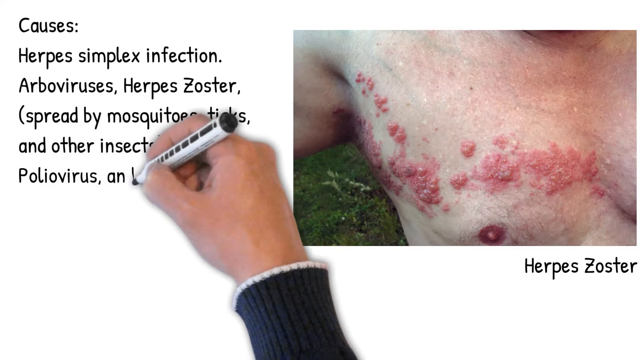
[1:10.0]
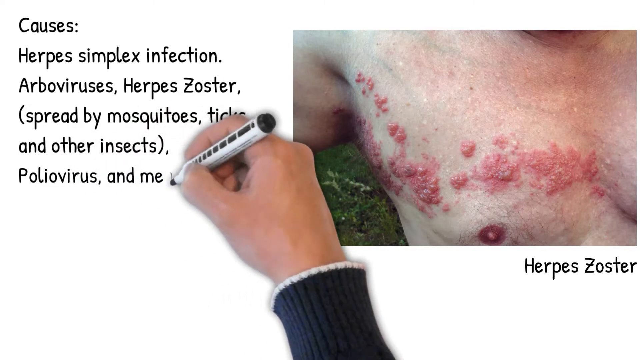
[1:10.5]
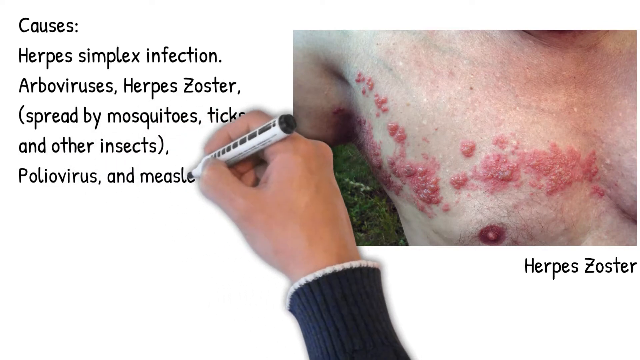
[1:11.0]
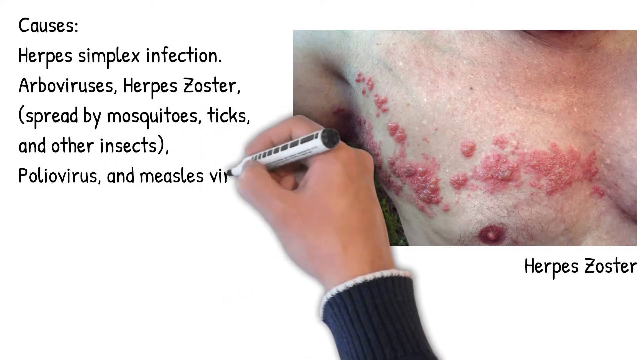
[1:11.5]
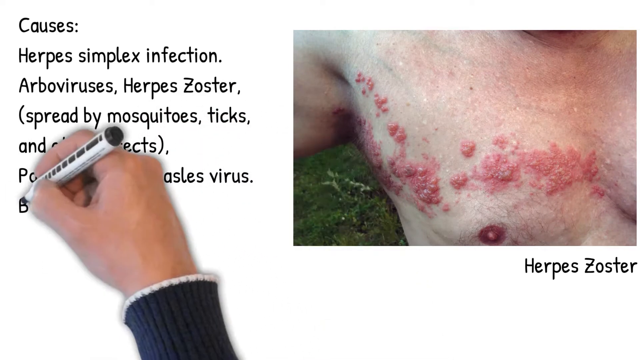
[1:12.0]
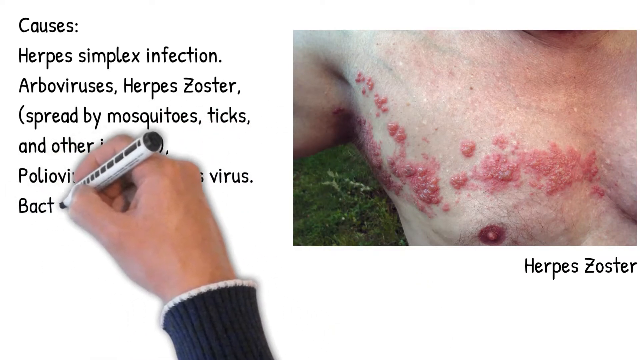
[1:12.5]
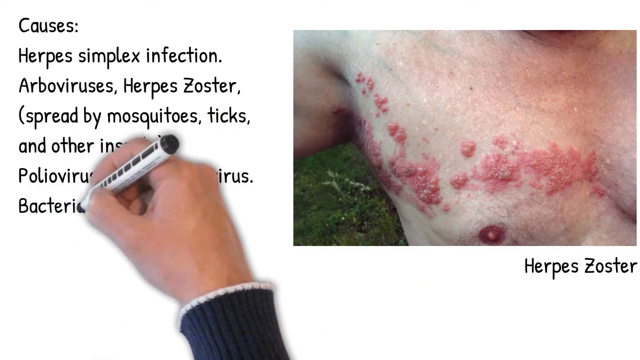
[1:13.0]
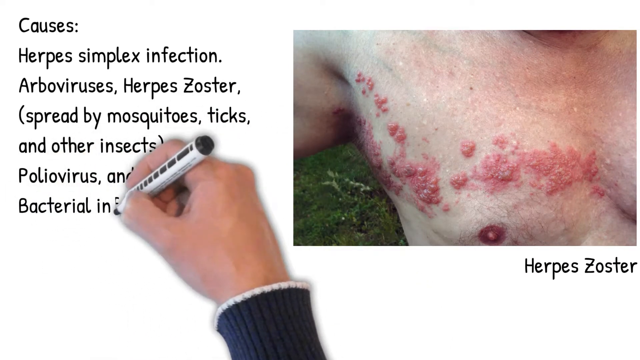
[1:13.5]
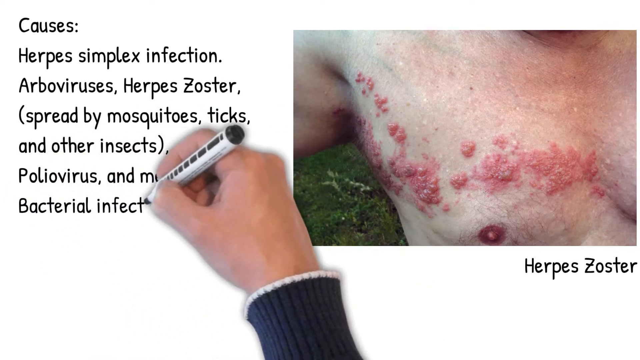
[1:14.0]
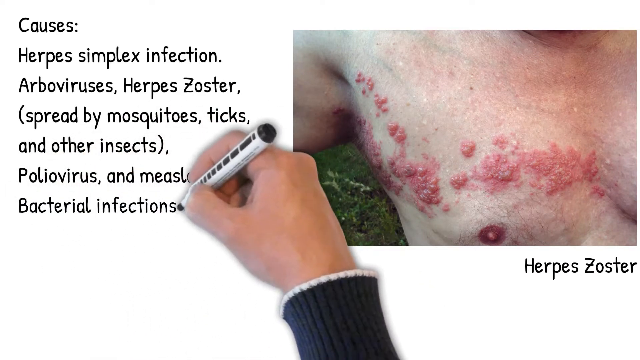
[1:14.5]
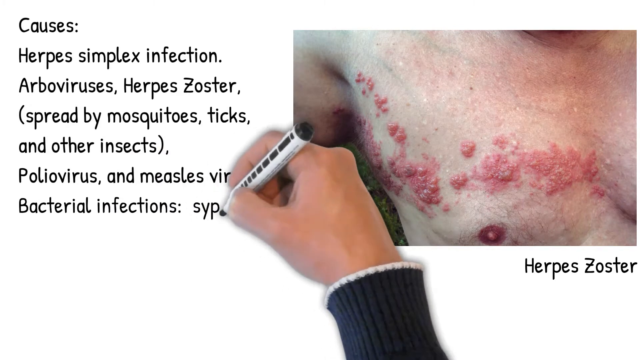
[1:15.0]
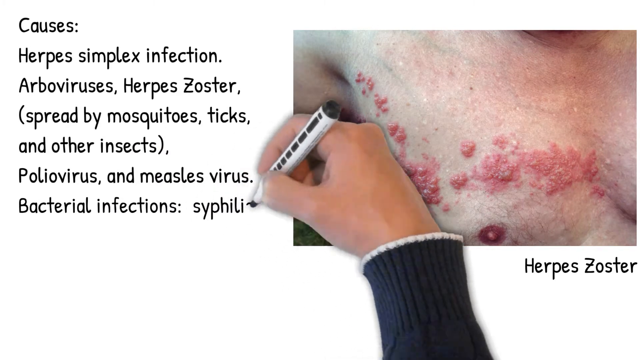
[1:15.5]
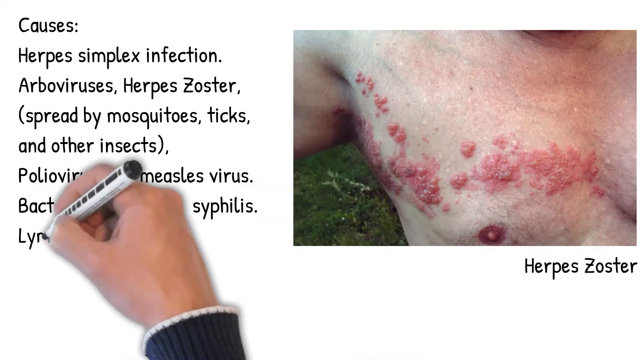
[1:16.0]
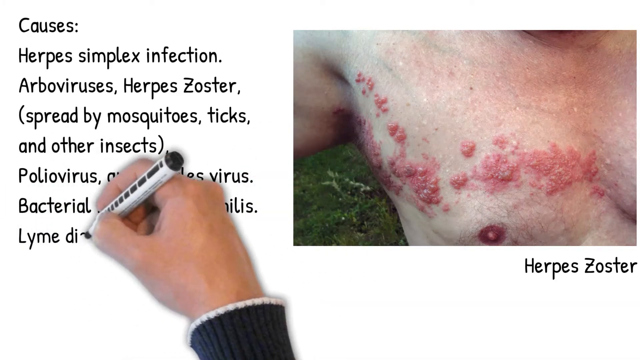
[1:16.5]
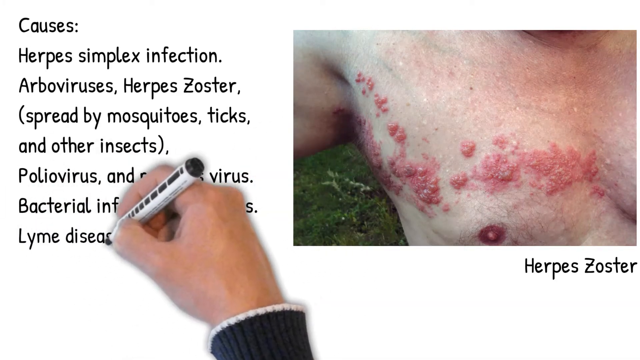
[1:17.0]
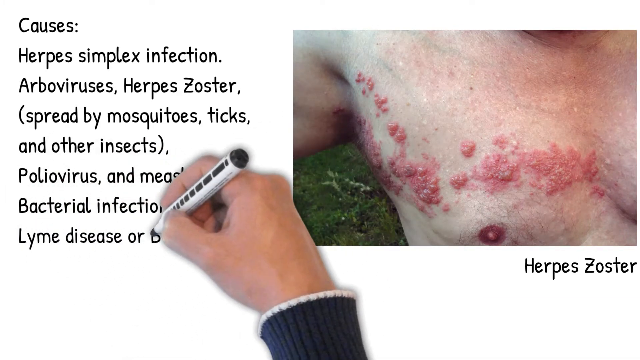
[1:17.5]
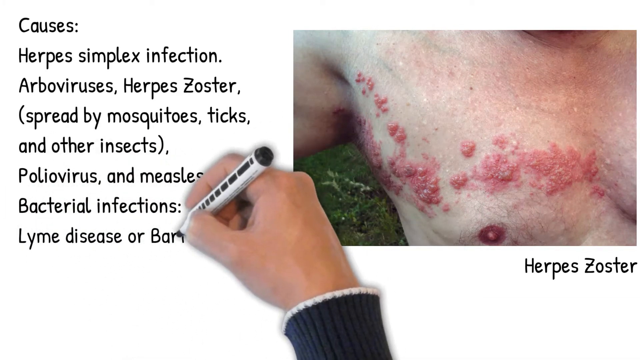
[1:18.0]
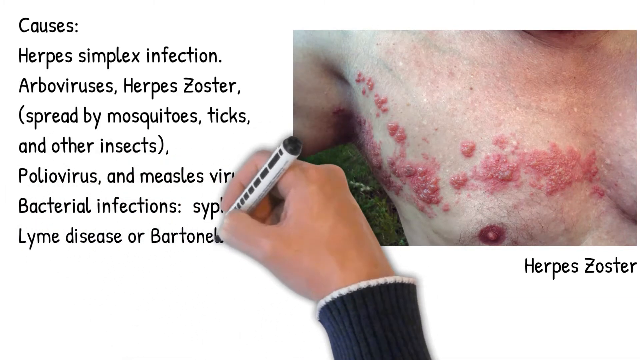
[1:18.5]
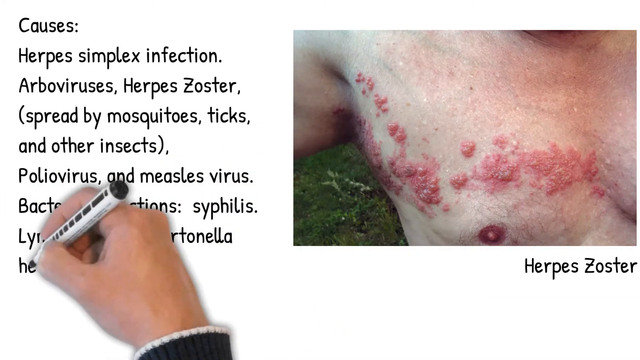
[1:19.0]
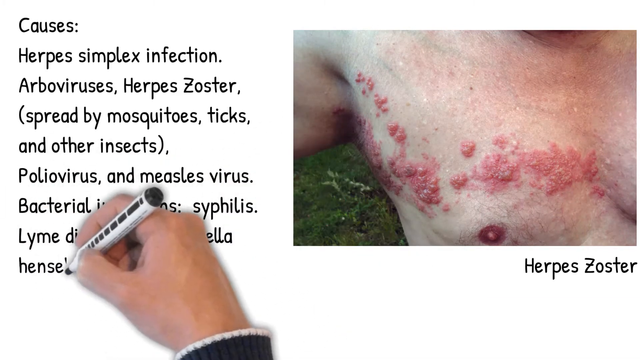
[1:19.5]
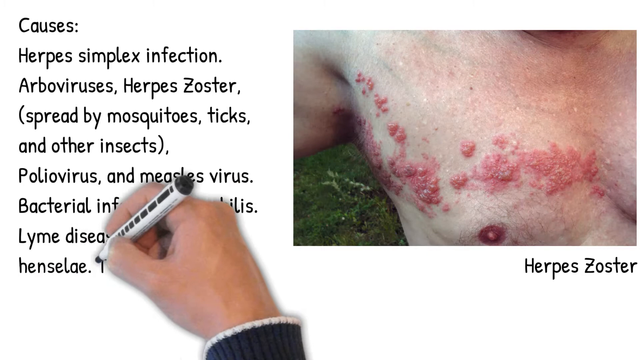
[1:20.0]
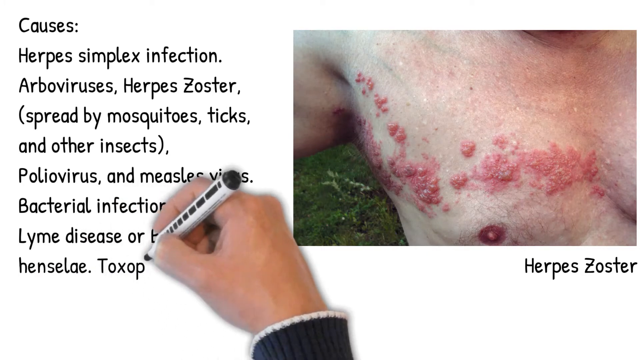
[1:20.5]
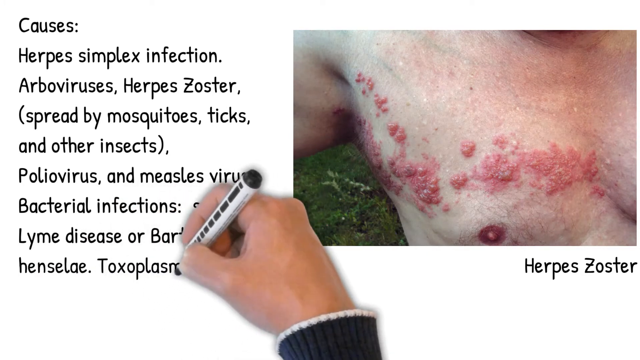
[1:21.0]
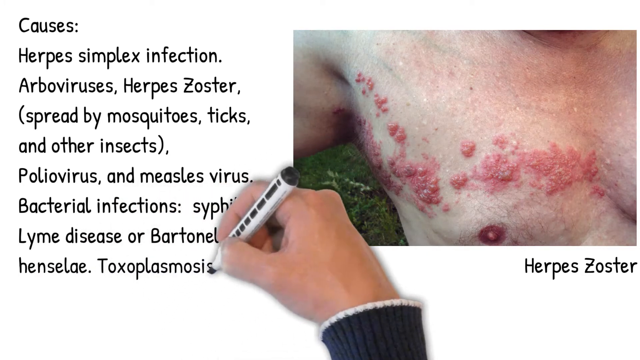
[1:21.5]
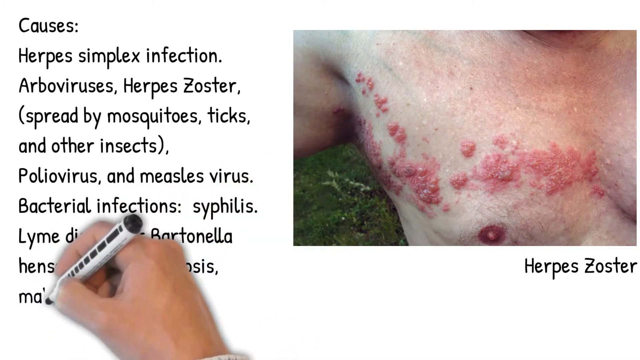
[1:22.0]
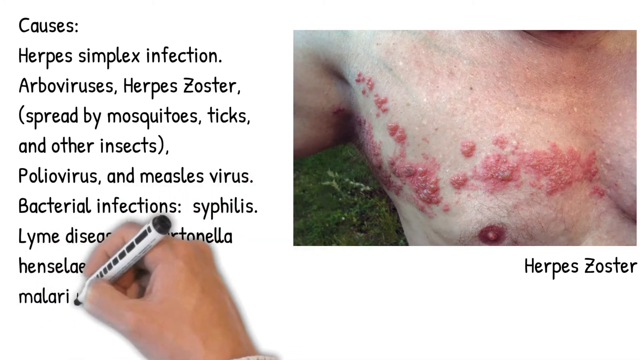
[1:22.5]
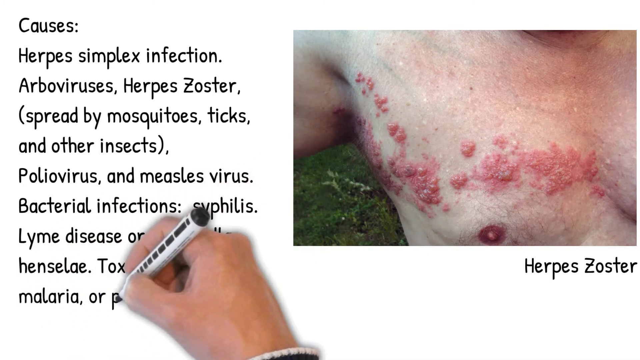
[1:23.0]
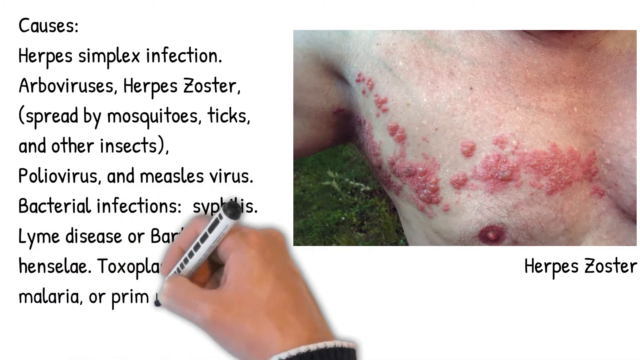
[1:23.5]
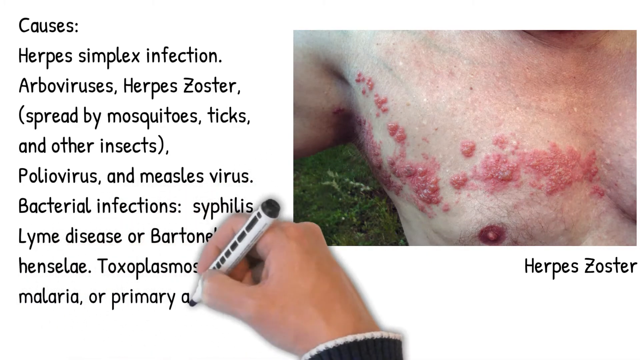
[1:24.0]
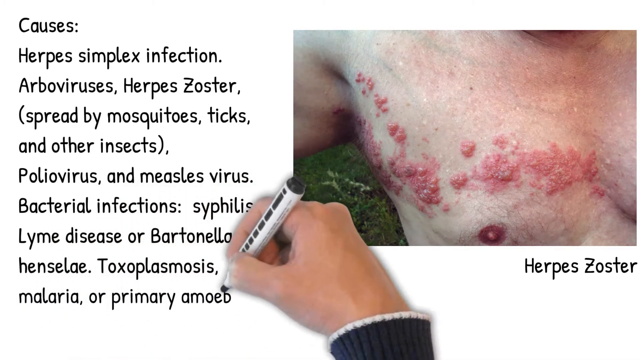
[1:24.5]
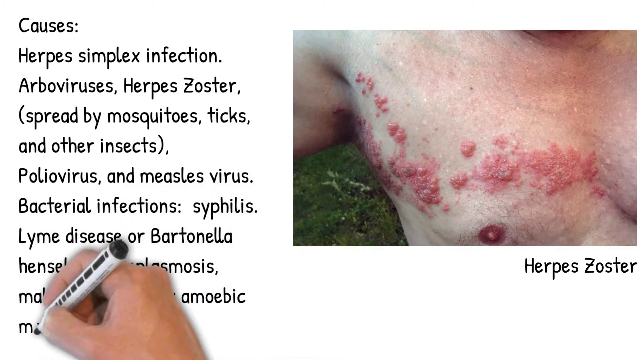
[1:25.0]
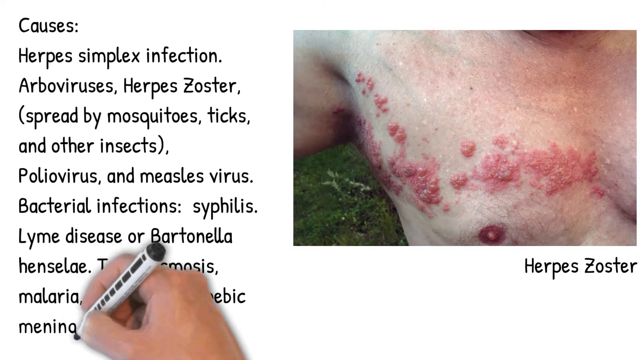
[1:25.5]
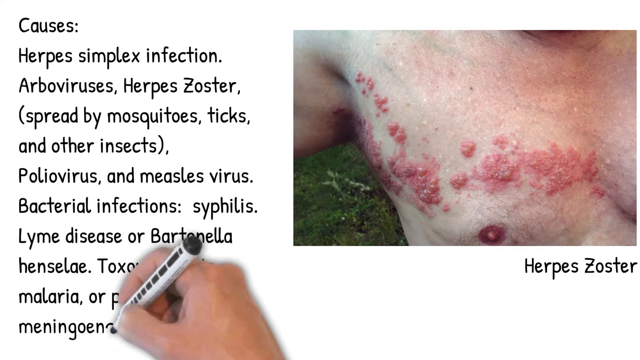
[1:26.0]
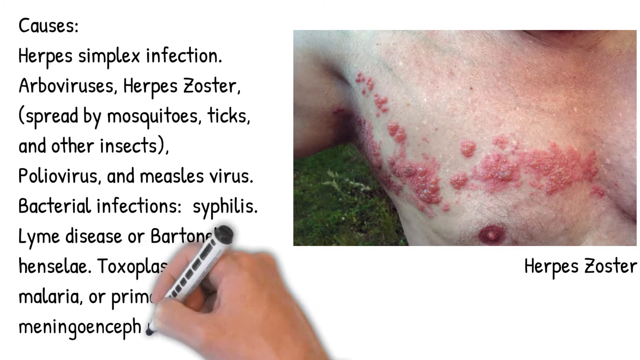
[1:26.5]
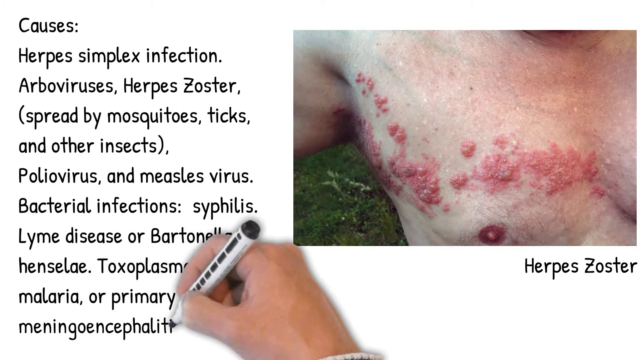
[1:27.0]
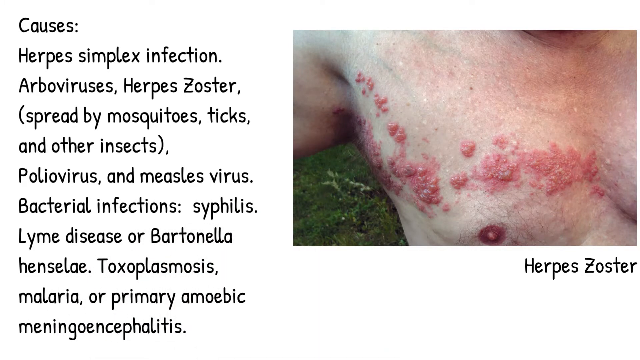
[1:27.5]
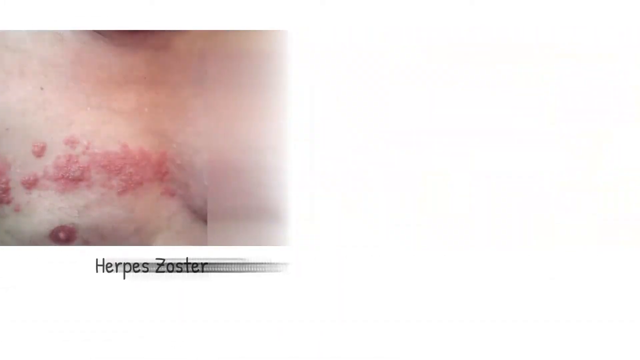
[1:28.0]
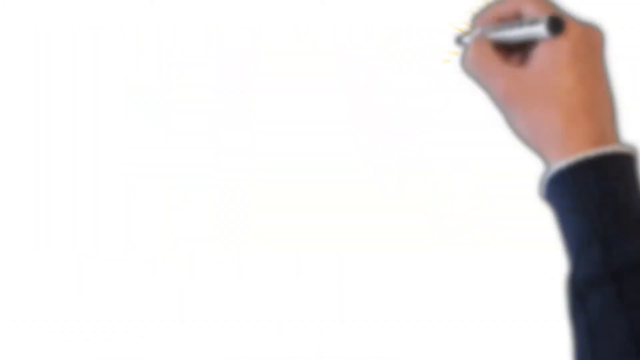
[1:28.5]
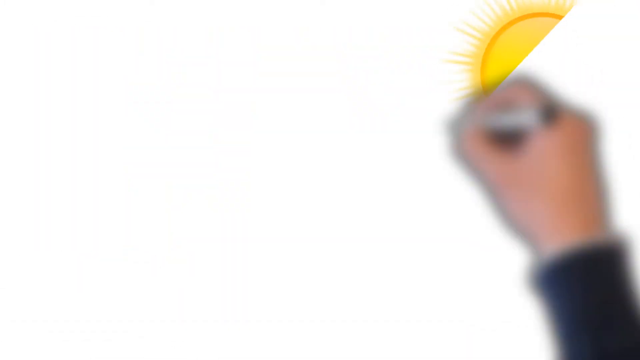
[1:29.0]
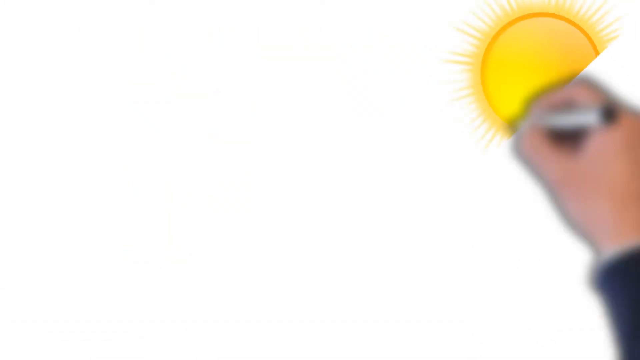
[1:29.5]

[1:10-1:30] The herpes simplex infection text and the picture of the chest with herpes zoster remain on screen. The text reads "herpes simplex infection is the cause, arboviruses, herpes zoster are spread by mosquitoes, ticks, and other insects. poliovirus, and measles virus, bacterial infections, syphilis, Lyme disease", followed by further causes. The video then switches from the handwriting to the next page, a blank white screen, where a yellow sun starts being drawn in the right-hand corner.